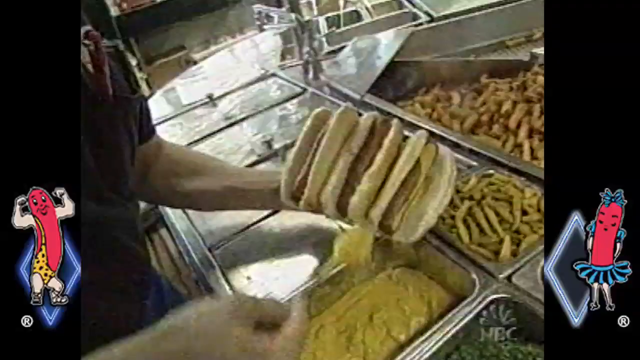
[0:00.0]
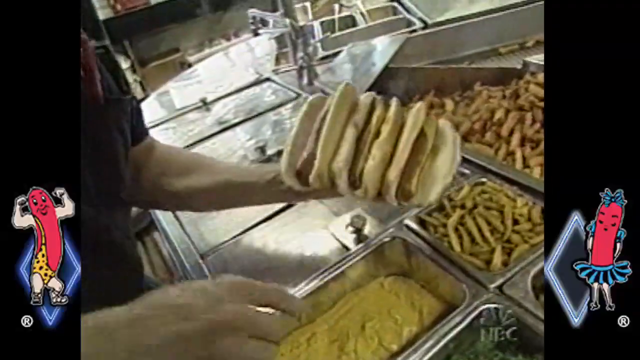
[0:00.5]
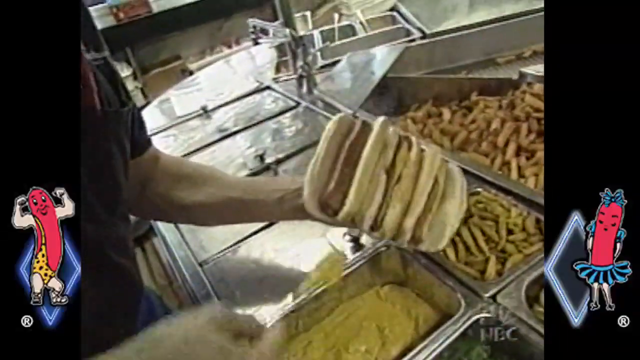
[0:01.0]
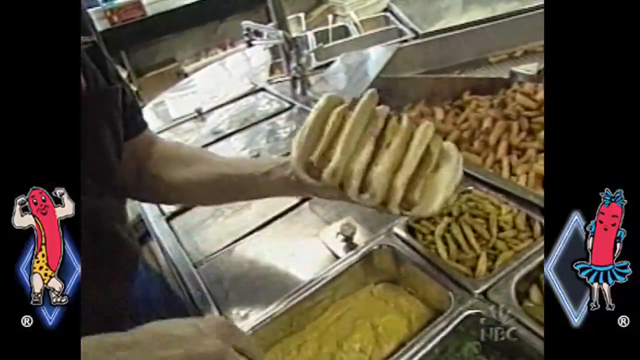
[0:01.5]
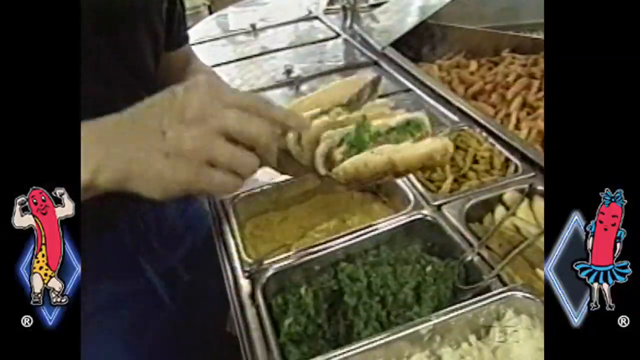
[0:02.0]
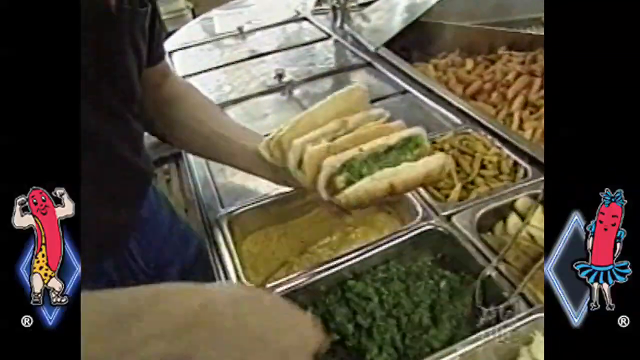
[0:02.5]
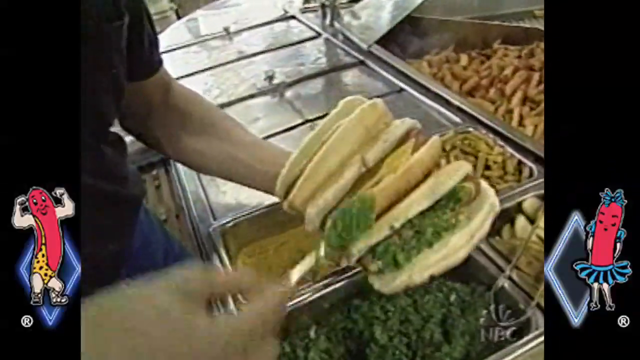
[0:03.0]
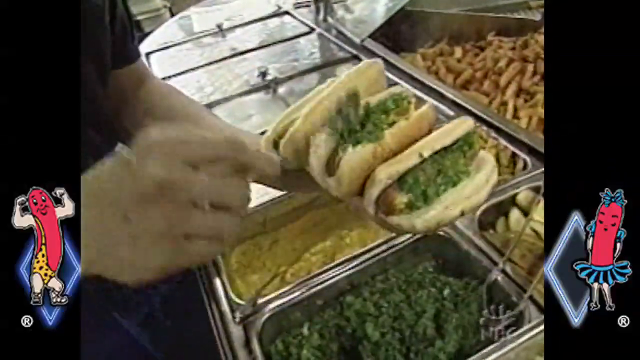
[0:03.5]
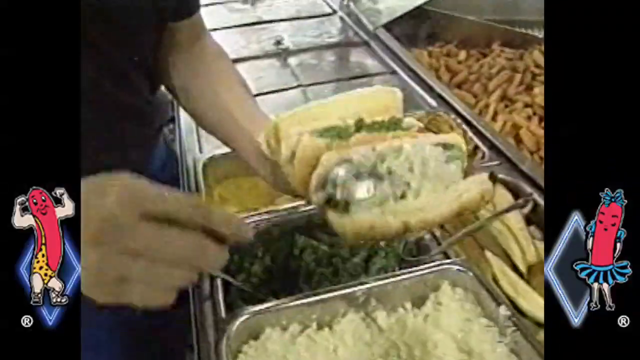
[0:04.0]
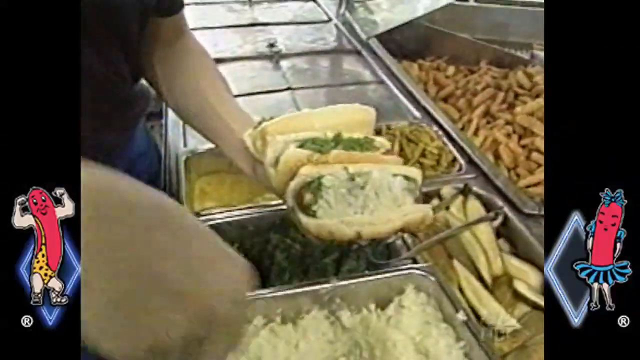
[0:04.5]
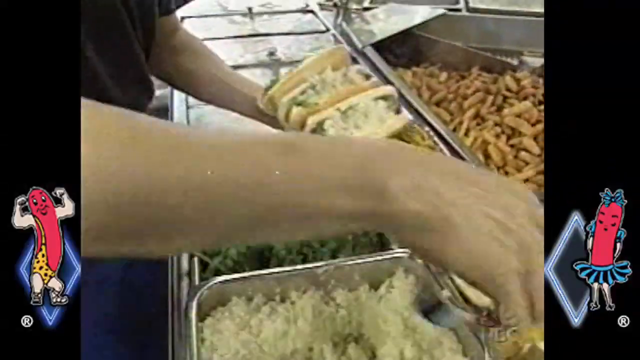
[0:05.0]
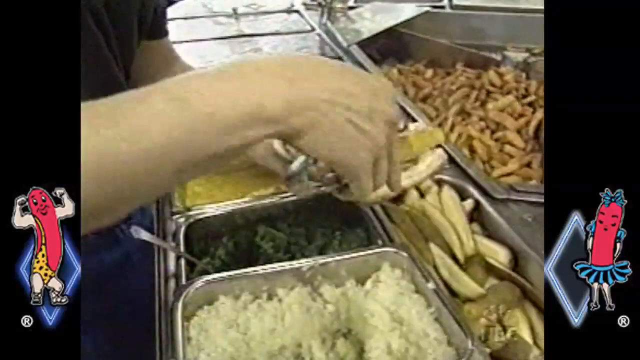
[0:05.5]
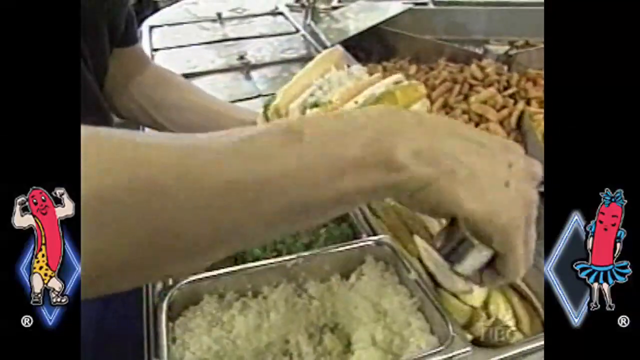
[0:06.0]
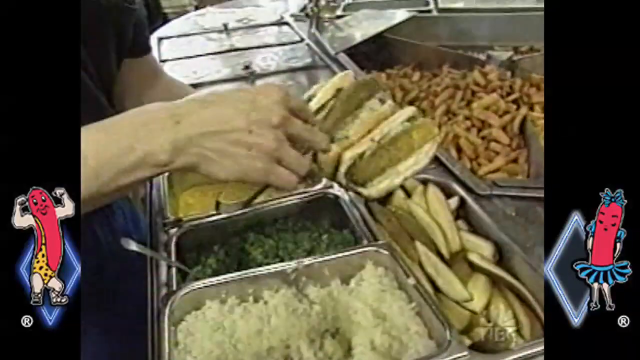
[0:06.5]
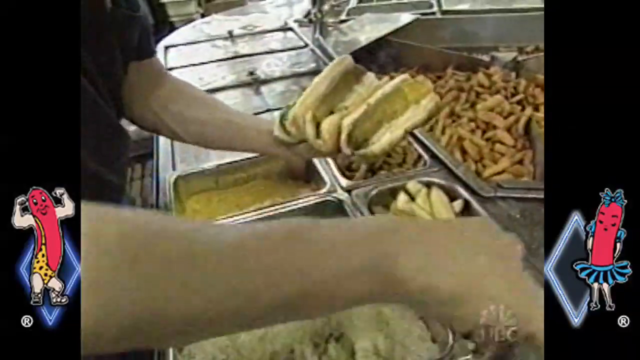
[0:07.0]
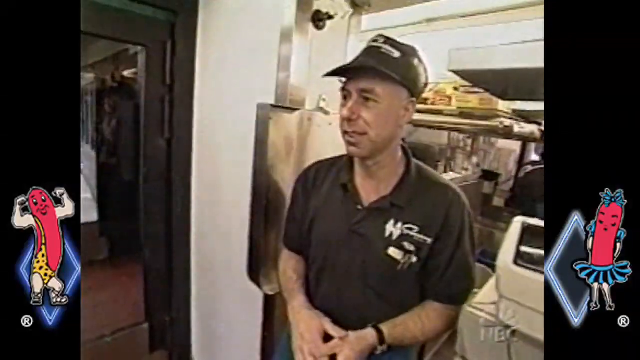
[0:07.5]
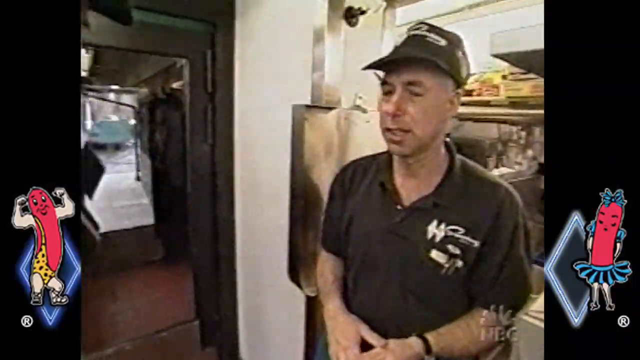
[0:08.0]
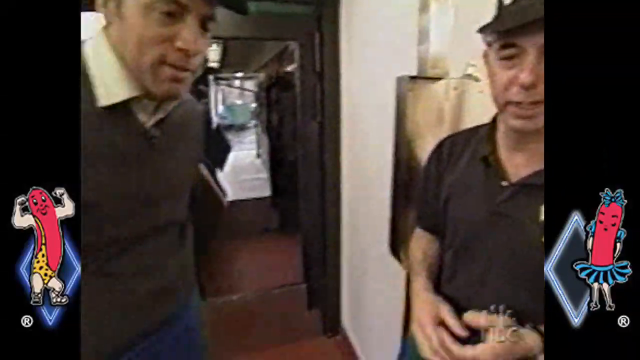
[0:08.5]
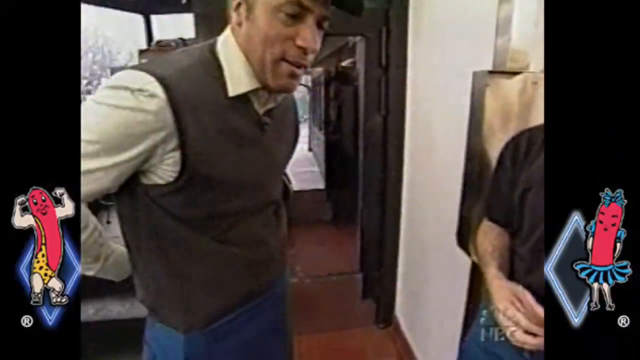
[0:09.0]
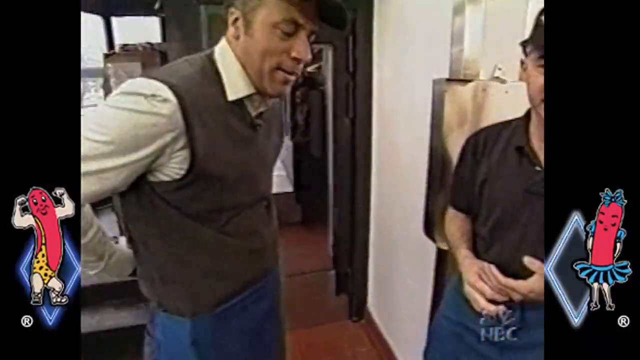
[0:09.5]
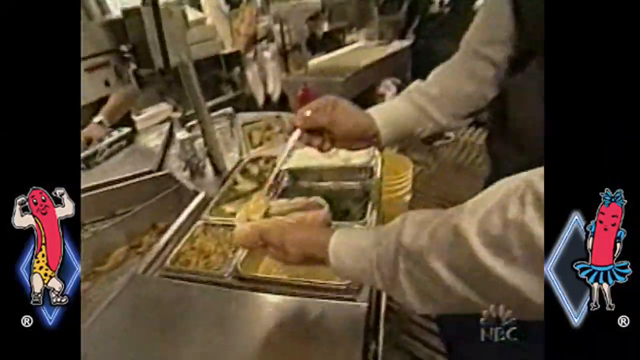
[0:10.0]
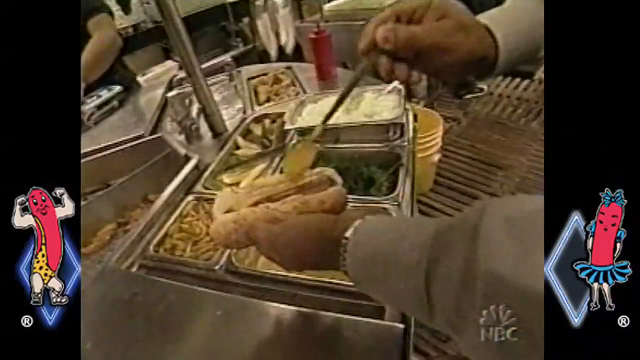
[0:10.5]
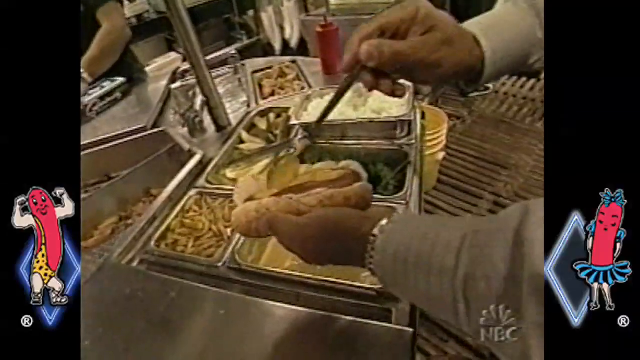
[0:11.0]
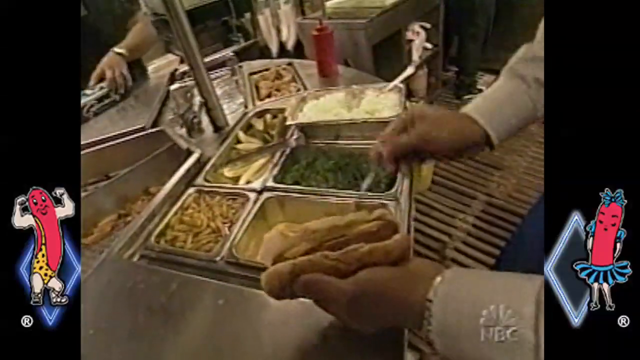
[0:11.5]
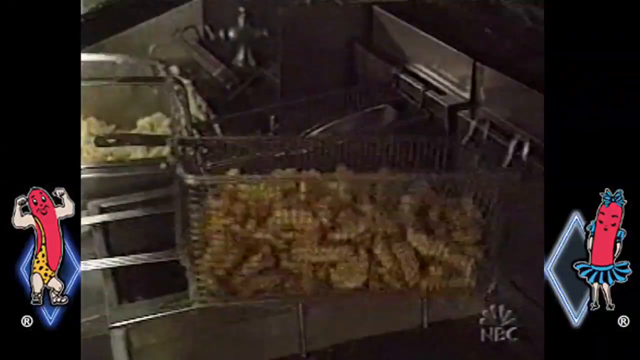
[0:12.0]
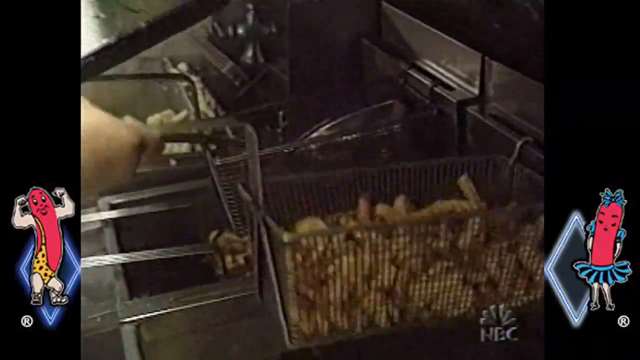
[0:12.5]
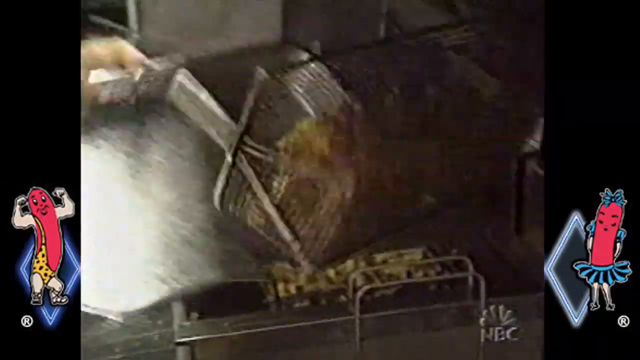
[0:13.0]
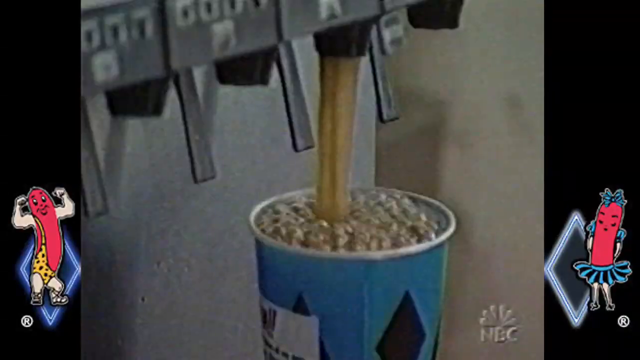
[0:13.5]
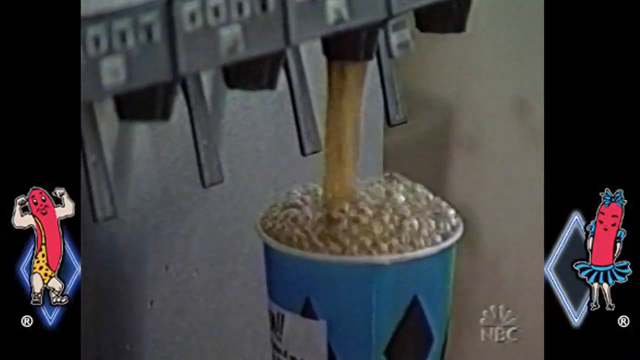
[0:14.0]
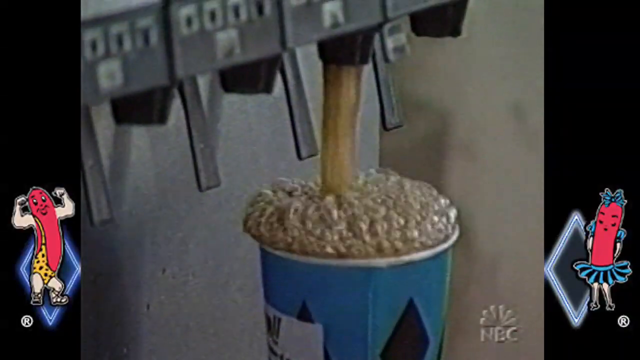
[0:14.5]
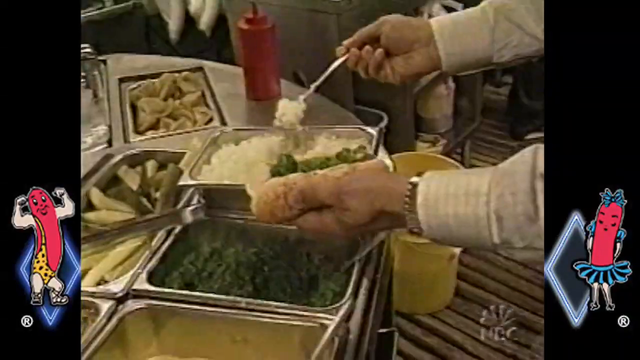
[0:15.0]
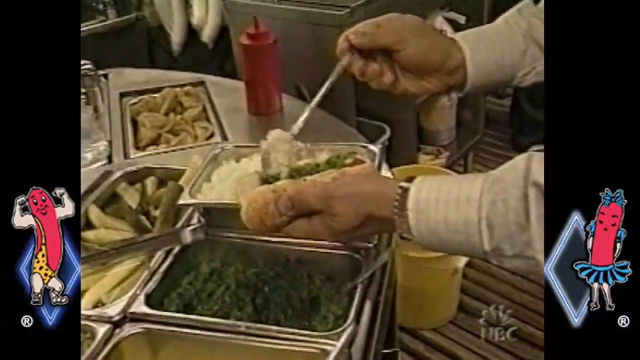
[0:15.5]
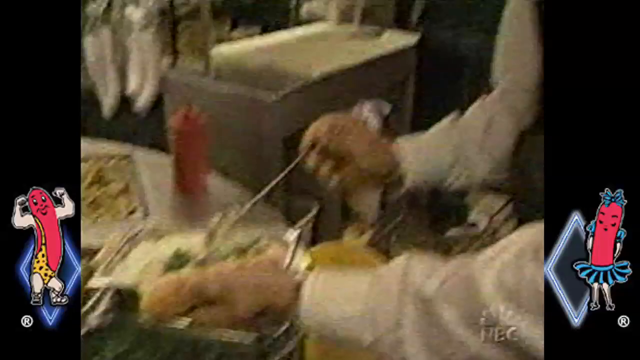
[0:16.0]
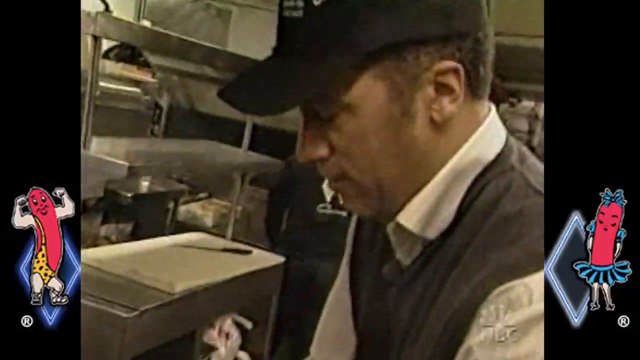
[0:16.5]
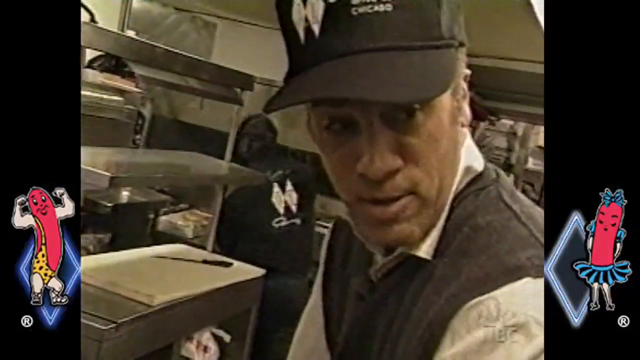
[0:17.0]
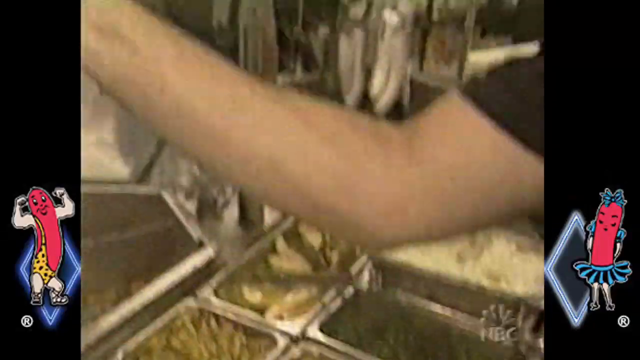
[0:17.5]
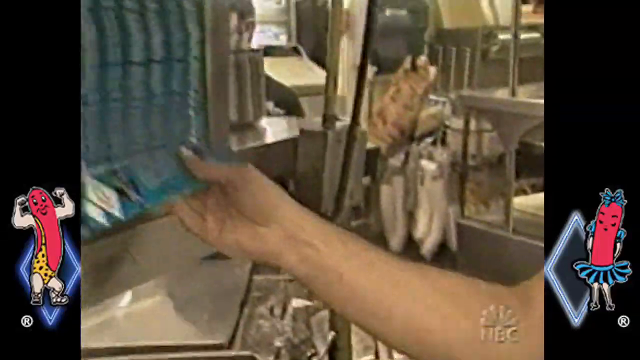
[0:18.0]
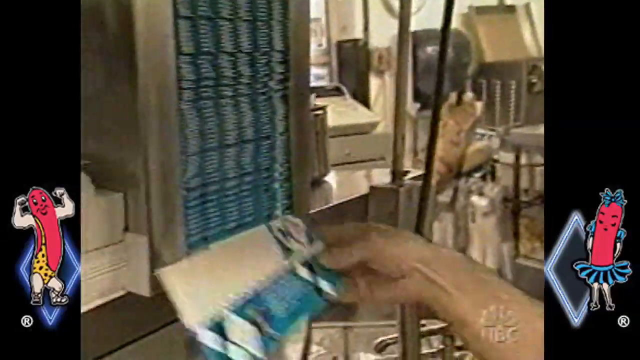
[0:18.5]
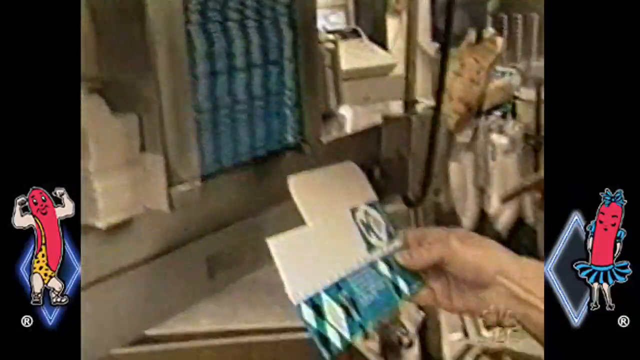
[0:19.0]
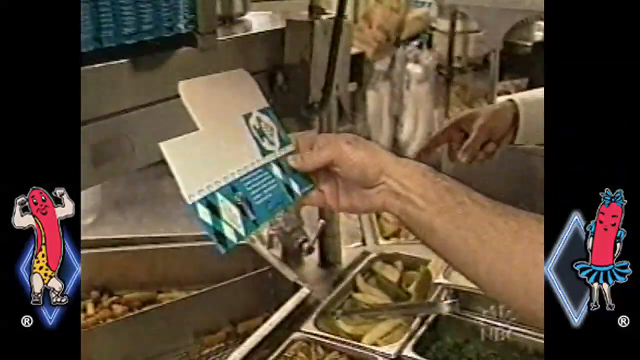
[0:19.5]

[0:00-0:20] A man in a black shirt holds three hot dog buns with what appear to be hot dogs inside them. With a spoon he puts a yellow substance, probably mustard, on two of the hot dogs. He goes to a serving container of green stuff and puts that on two of the hot dogs, then to a serving container of white stuff, which could be sauerkraut or diced onions, and puts that on two of the hot dogs. He then appears to put sausages in them. Next a clean-shaven man, probably Caucasian, wears a black hat with white text on it and a black polo shirt with text on the left-hand corner, probably the business name. He talks to another man who wears a cardigan over a white collared dress shirt and a hat. What looks like the man in the white dress shirt puts mustard on a hot dog. Someone shakes what appears to be fries in a fryer. A blue cup sits in a soda fountain area as a beverage pours into it, overflowing and bubbling at the top. The man in the dress shirt, wearing a watch on his left wrist, puts the white stuff on a hot dog that has green stuff on it. A ketchup bottle is next to one of the trays of white stuff, the green stuff is in a tray next to it, and in front are tongs and a tray that looks like it holds fries. His face is visible; he wears a hat, and he looks back and talks to somebody. A hand pulls out a piece of cardboard that looks like it can be configured to hold a hot dog.